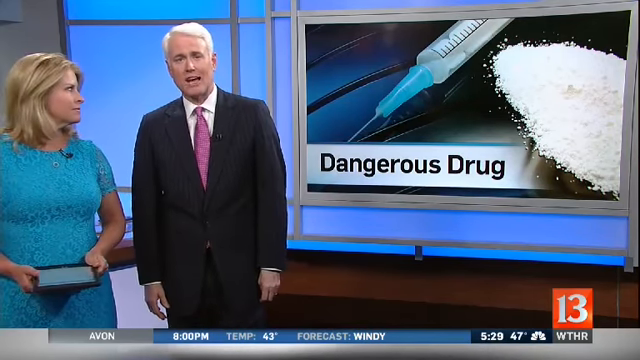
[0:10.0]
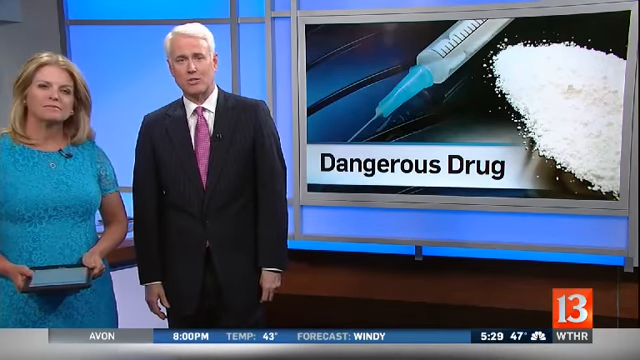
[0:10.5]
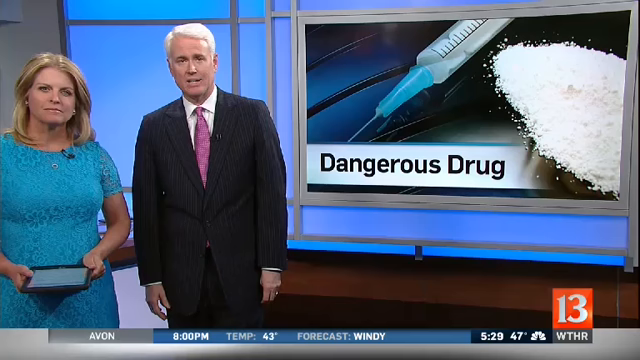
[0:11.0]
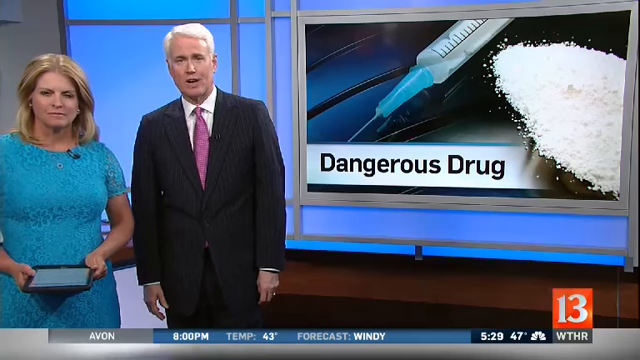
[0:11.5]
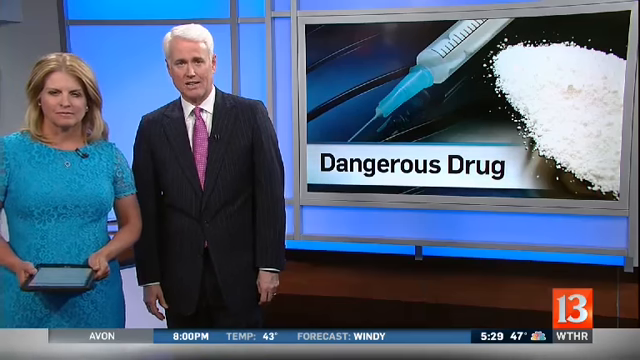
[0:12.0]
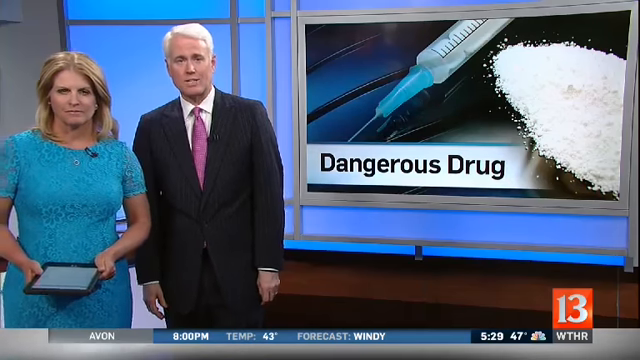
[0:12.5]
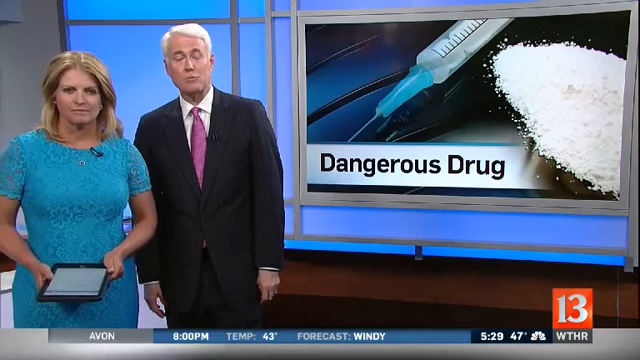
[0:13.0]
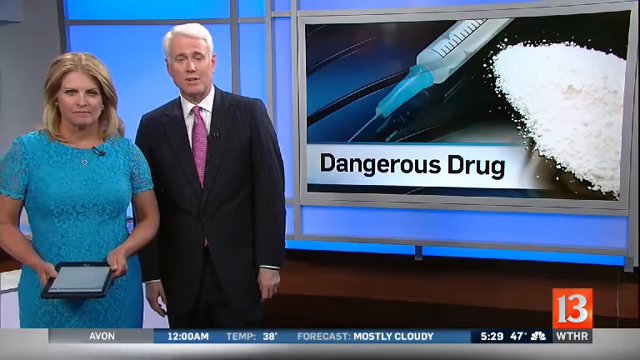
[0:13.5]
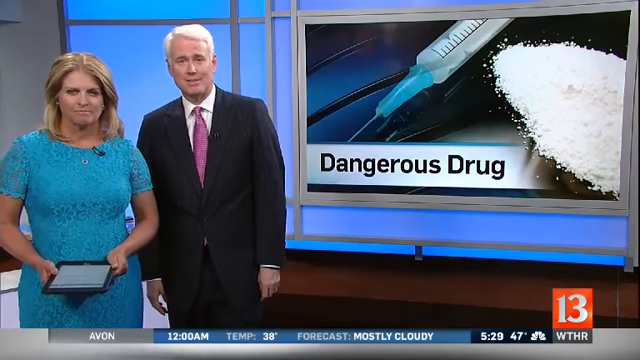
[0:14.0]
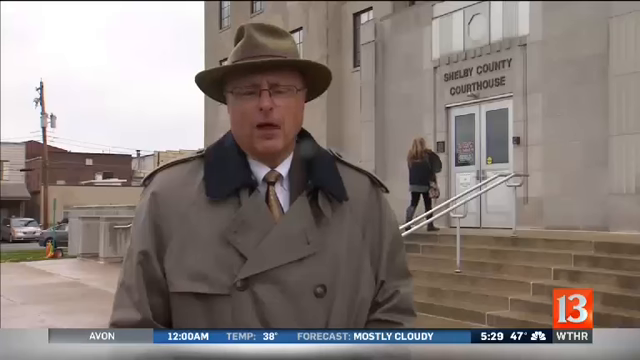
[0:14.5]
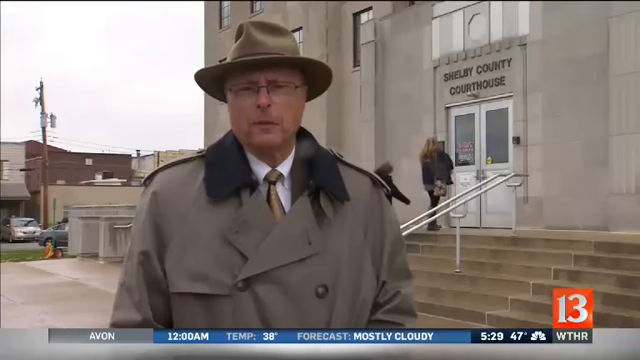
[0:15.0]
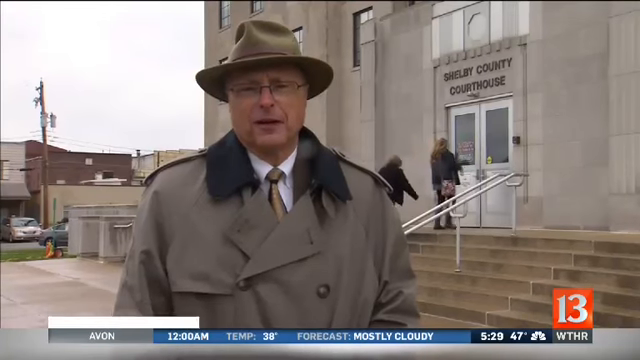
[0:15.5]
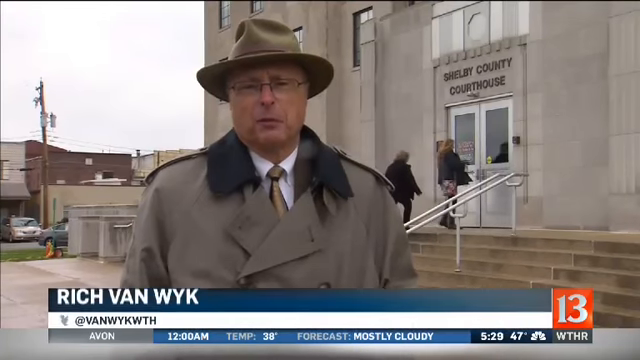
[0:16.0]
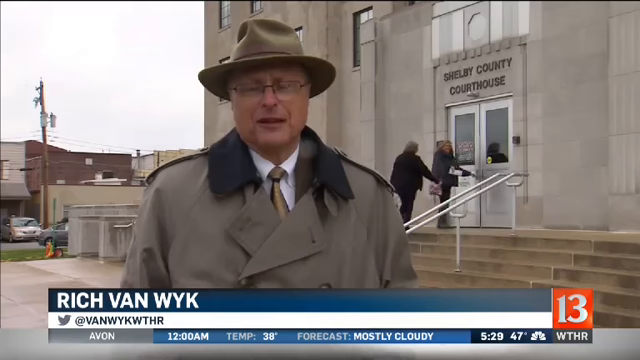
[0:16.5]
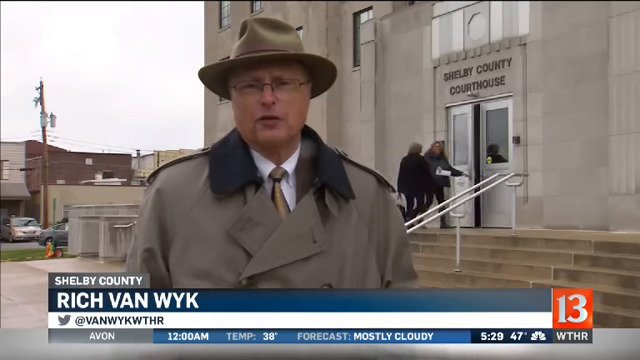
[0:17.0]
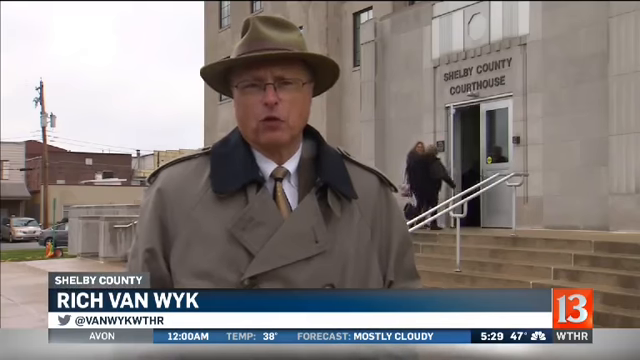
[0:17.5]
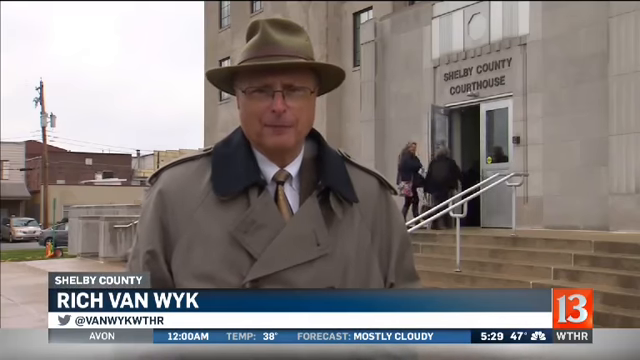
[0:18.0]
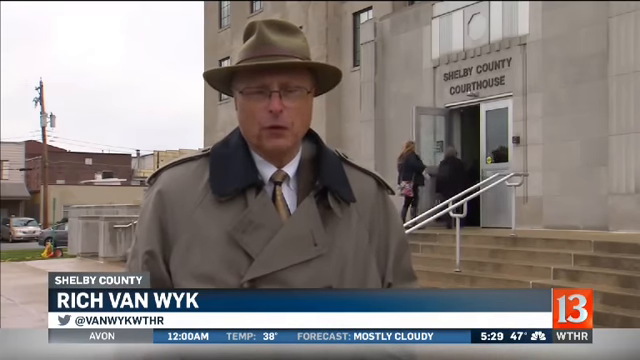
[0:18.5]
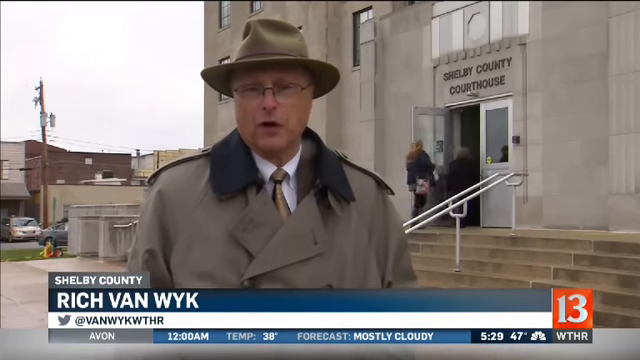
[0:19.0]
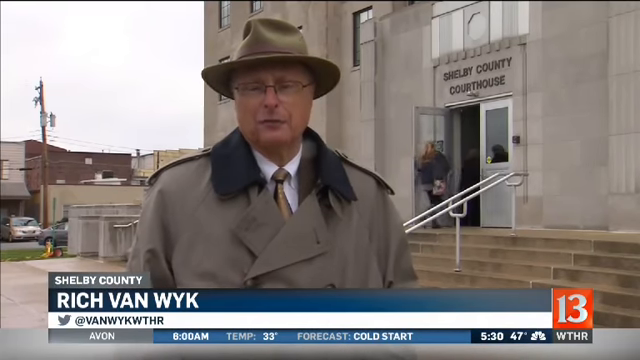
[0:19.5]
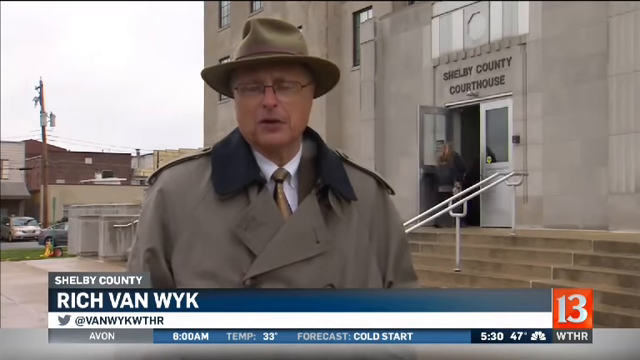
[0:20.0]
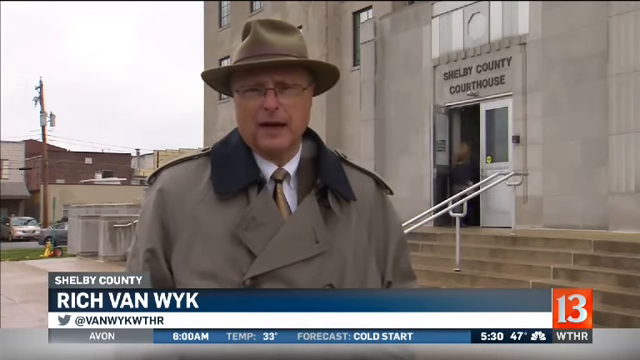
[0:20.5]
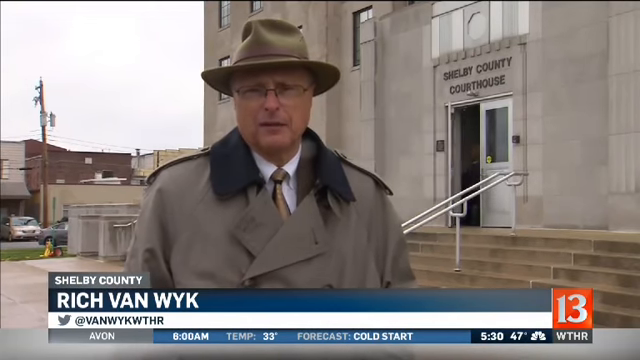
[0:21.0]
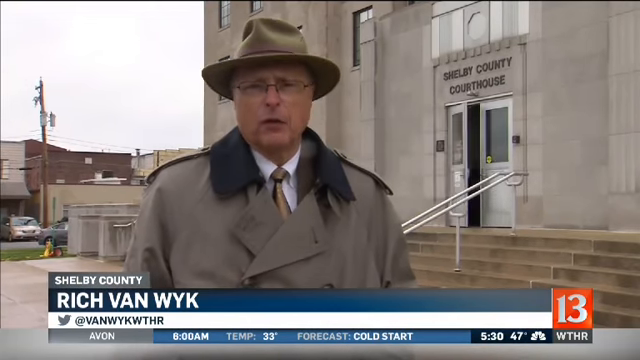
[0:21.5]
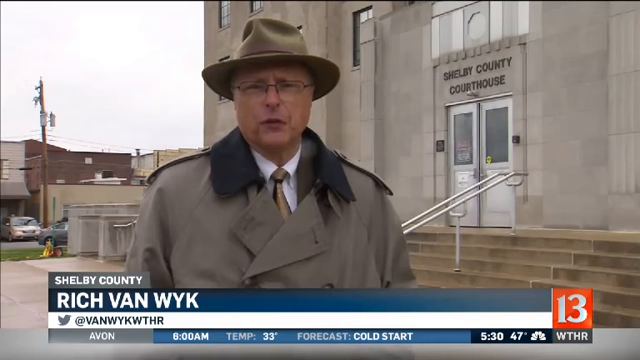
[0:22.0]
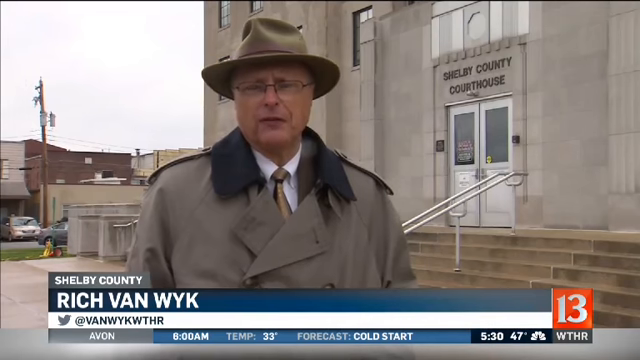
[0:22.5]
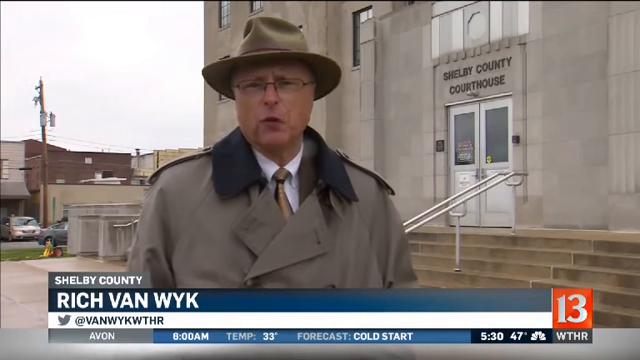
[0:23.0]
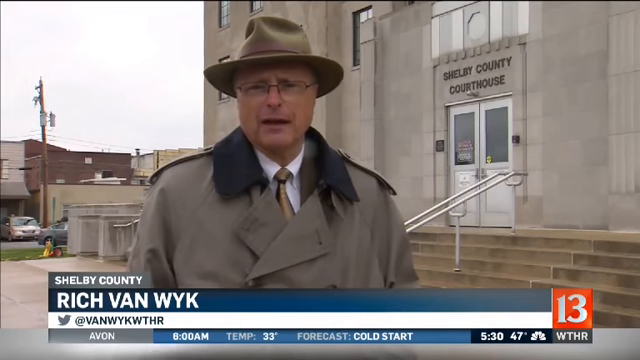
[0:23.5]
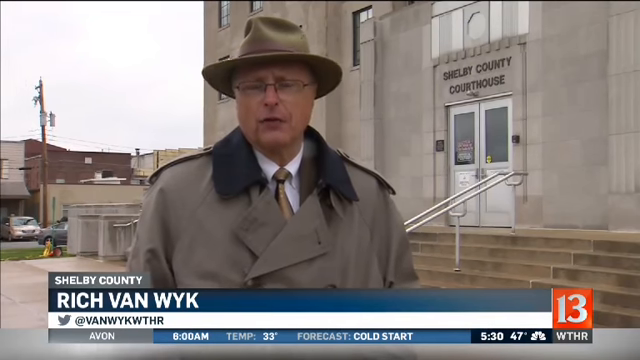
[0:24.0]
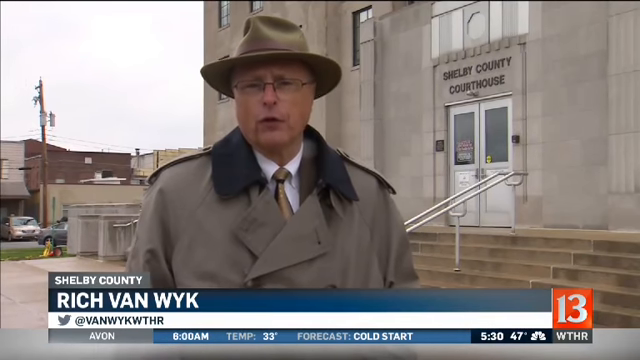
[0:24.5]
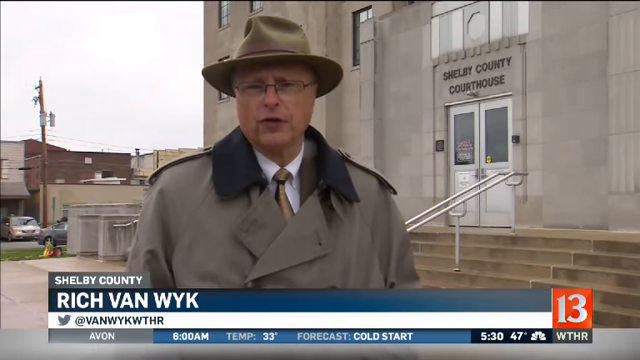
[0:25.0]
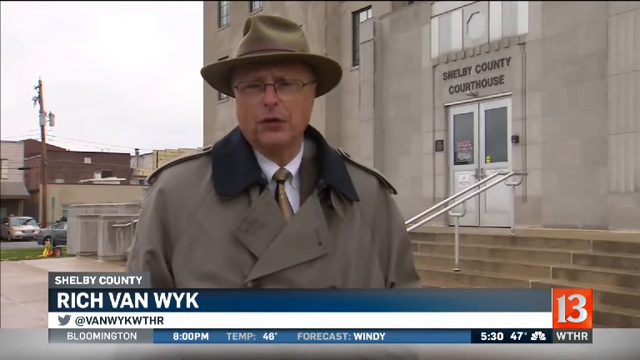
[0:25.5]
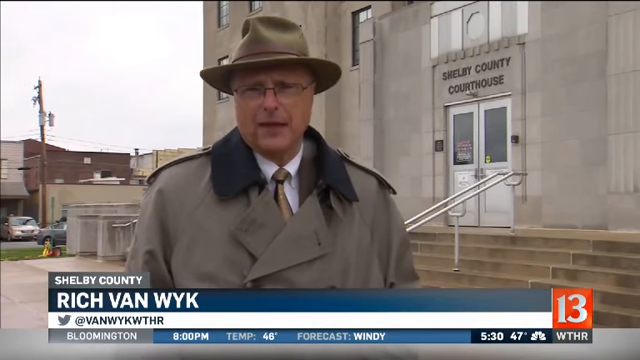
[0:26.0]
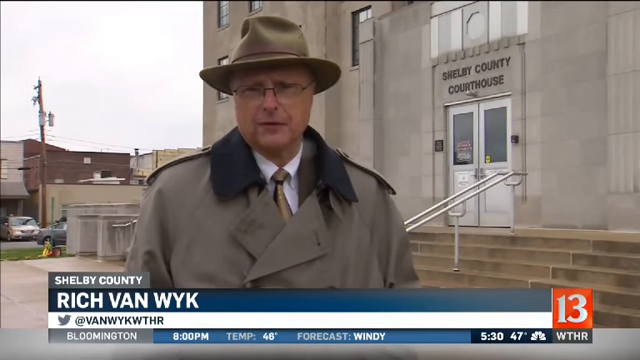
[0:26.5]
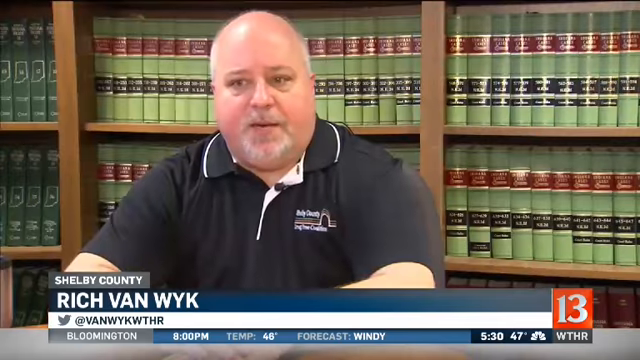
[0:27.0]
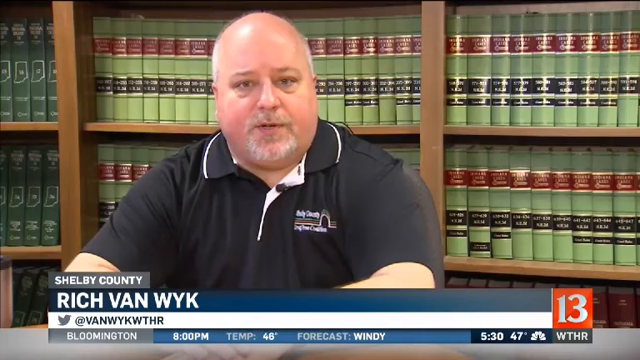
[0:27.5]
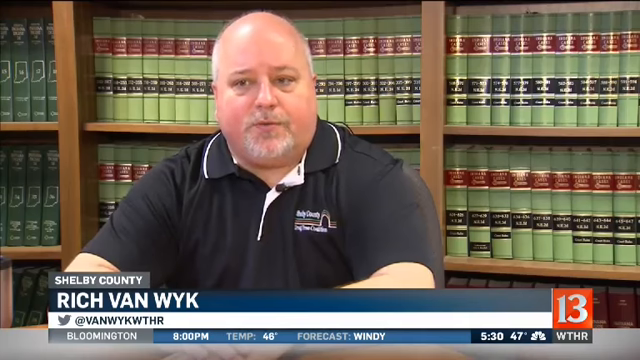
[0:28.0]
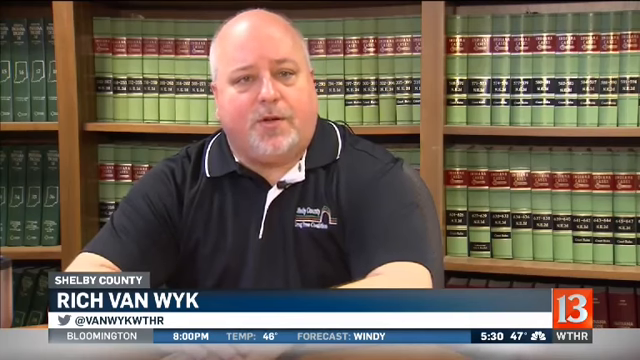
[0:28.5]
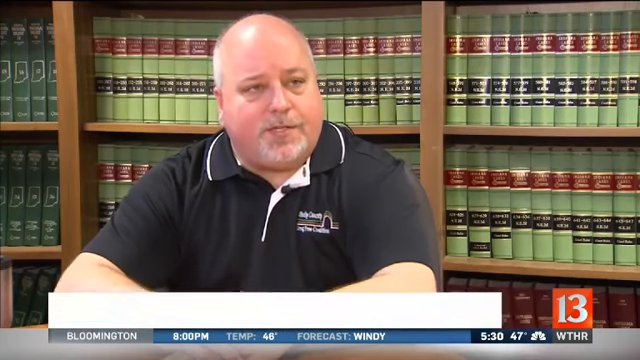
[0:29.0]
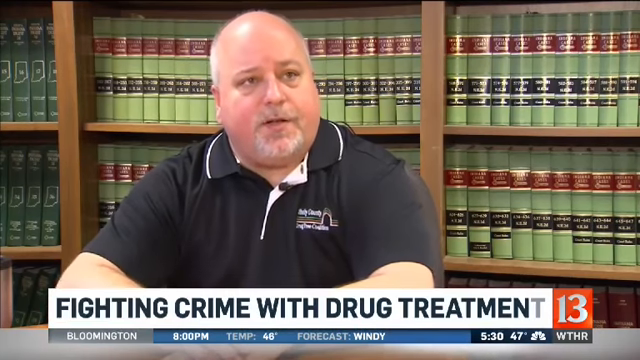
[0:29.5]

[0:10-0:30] On the right-hand side of the screen is a picture of cocaine beside the two presenters. At the bottom of the screen is a weather forecast for areas and states, and on the right it shows 529 and 47 degrees Fahrenheit. The man in the black suit speaks. The scene then changes to a man with a Twitter handle shown below him as "fake WTHR". He is a white male wearing an Inspector Gadget-type coat, a white shirt, a gold tie, a brown hat and glasses. He is outside a Shelby County courthouse, and in the background two ladies walk to the door, above which the name "Shelby County Courthouse" appears. Another scene then shows another male.